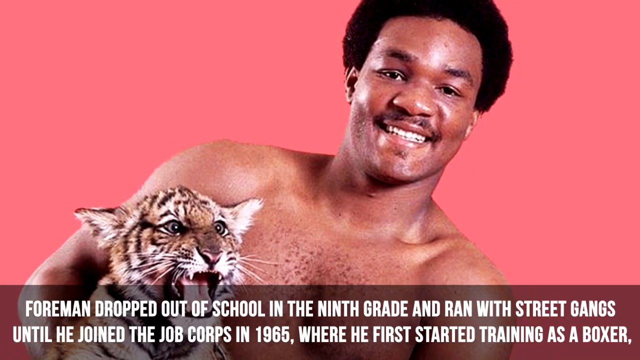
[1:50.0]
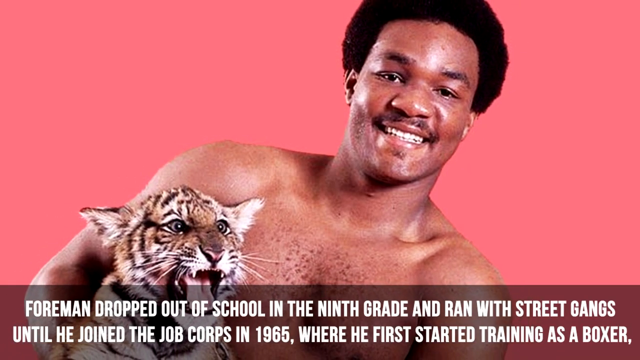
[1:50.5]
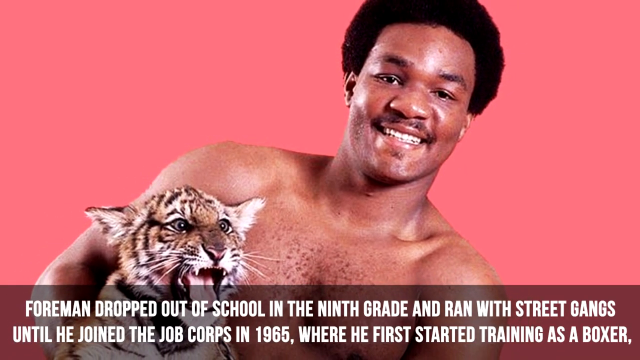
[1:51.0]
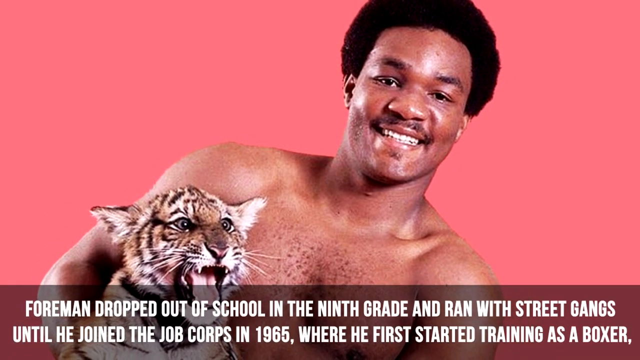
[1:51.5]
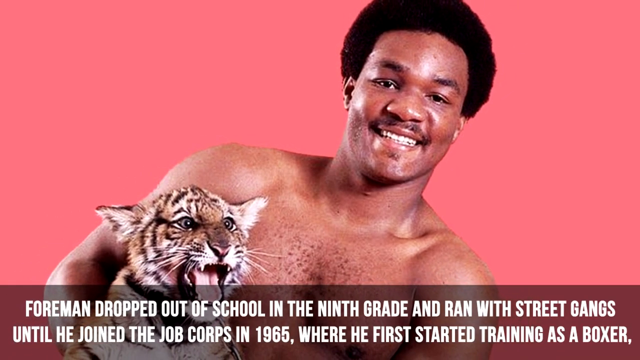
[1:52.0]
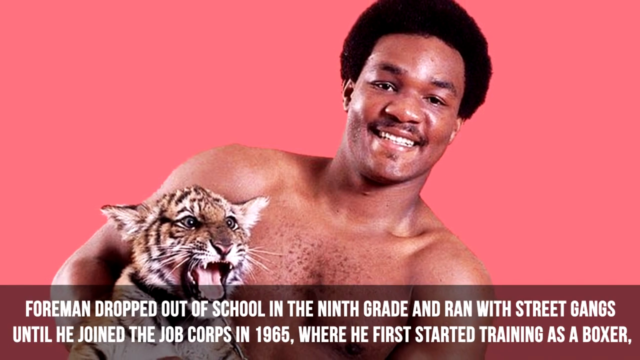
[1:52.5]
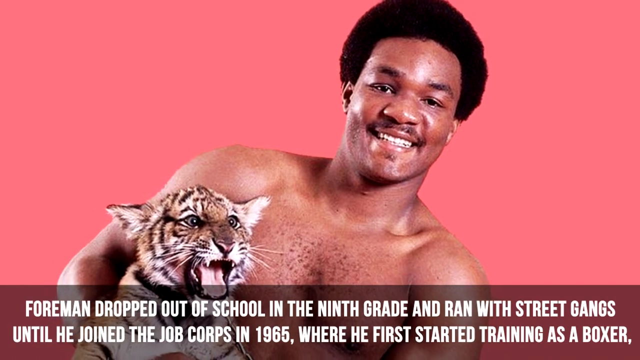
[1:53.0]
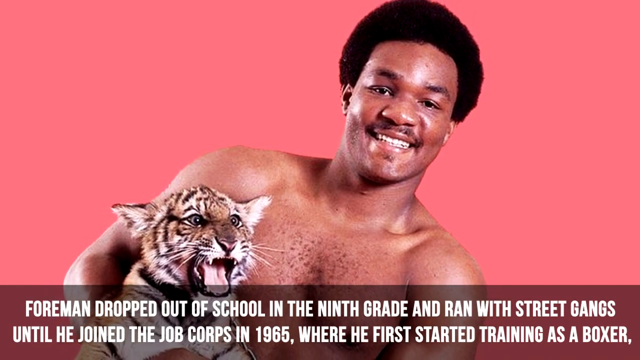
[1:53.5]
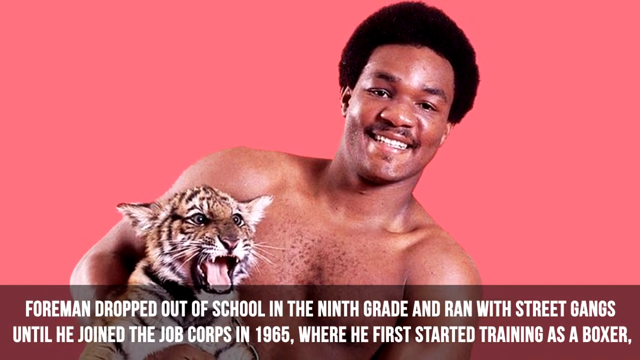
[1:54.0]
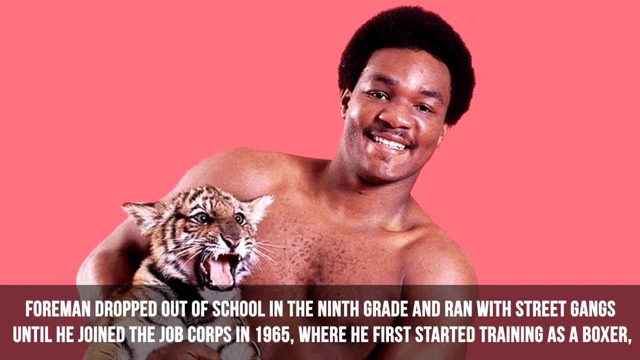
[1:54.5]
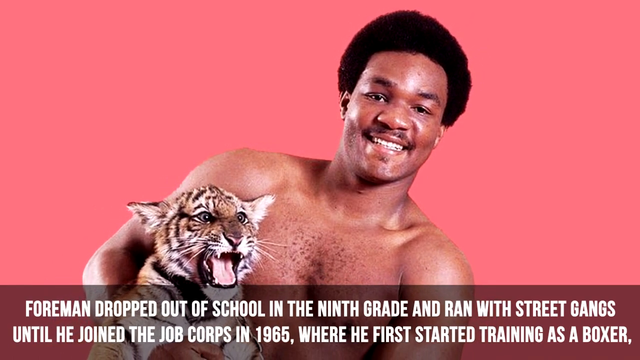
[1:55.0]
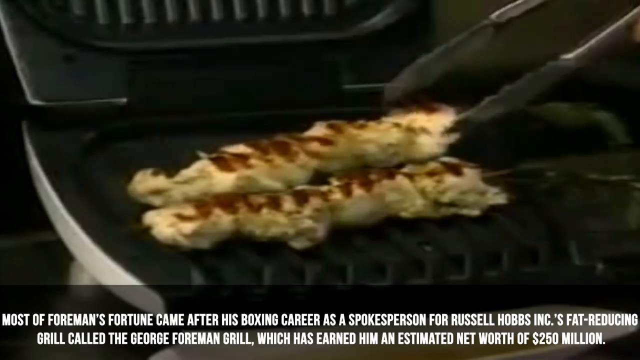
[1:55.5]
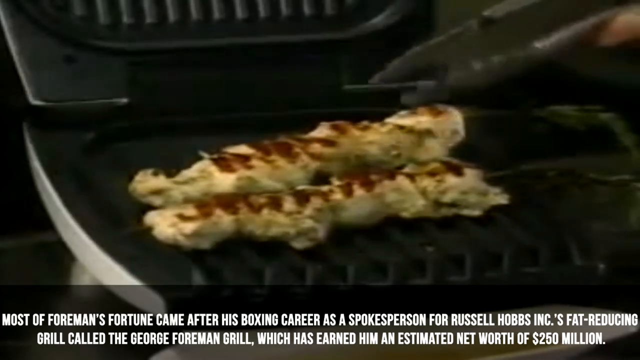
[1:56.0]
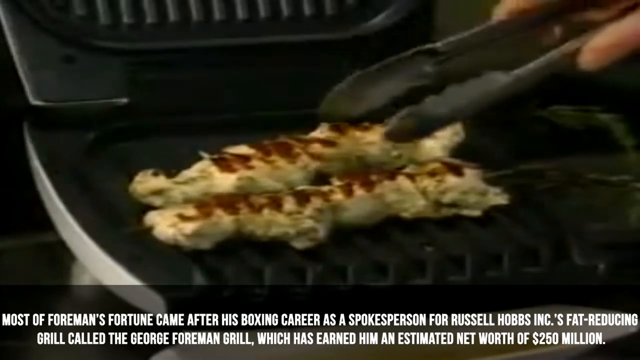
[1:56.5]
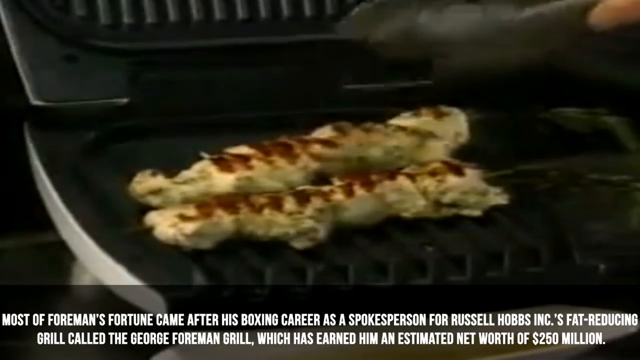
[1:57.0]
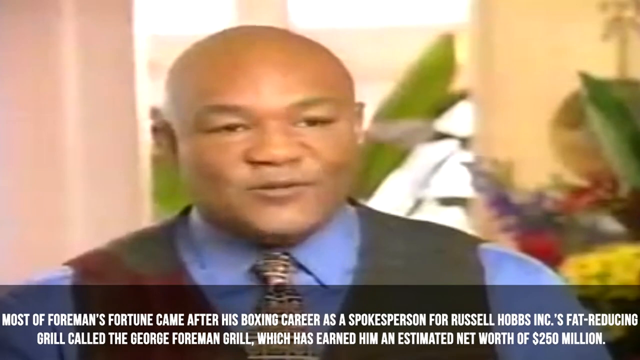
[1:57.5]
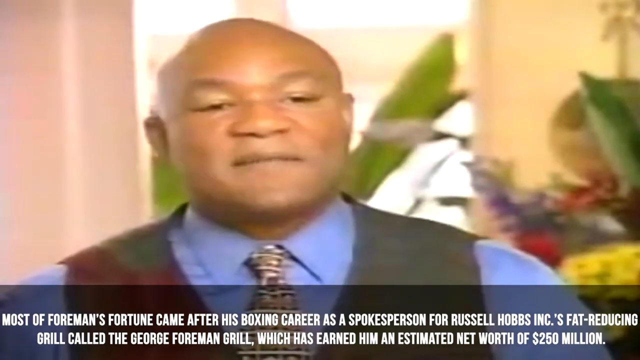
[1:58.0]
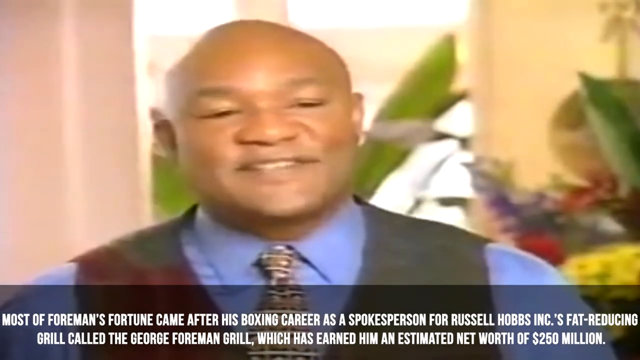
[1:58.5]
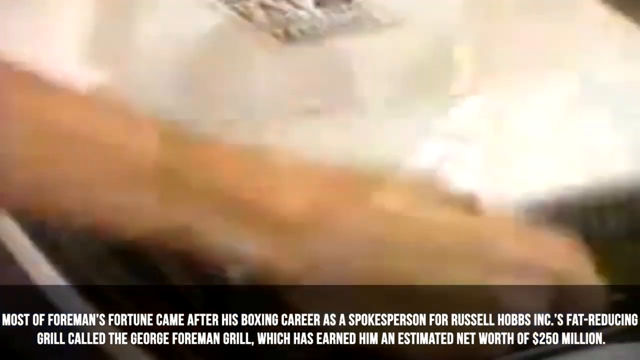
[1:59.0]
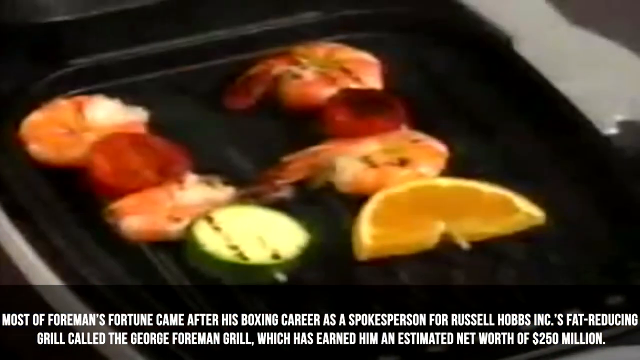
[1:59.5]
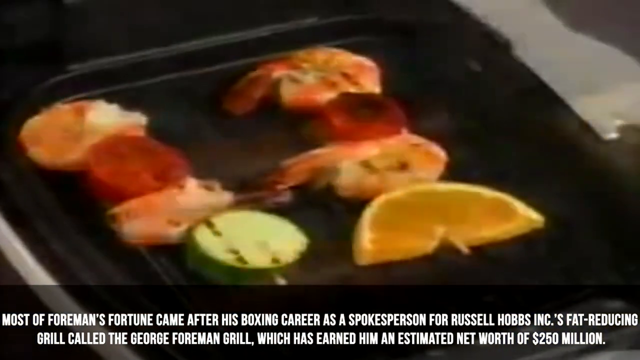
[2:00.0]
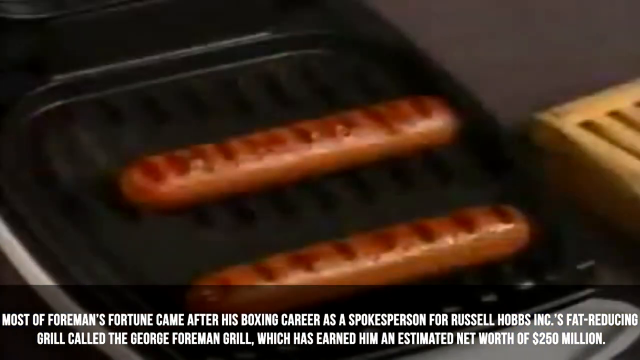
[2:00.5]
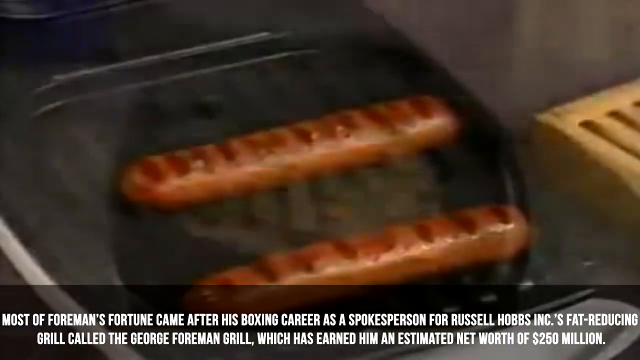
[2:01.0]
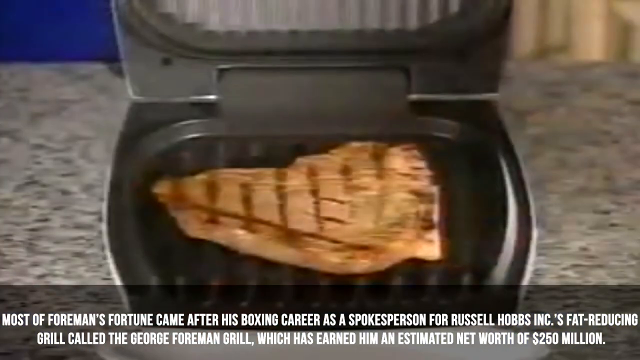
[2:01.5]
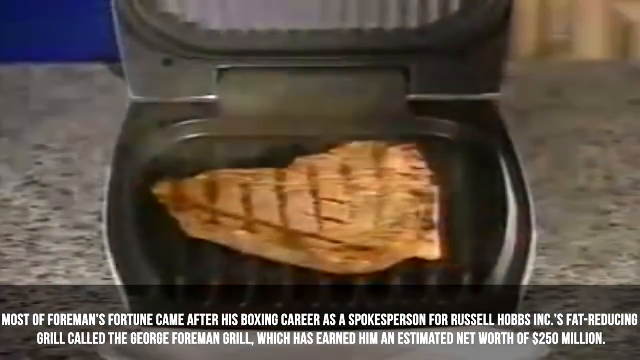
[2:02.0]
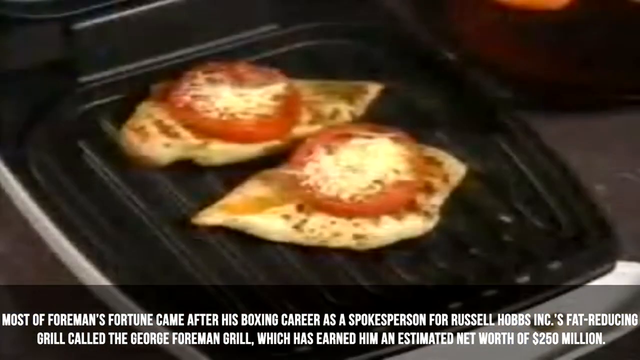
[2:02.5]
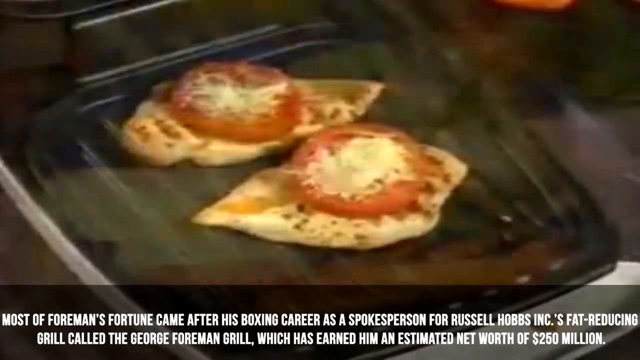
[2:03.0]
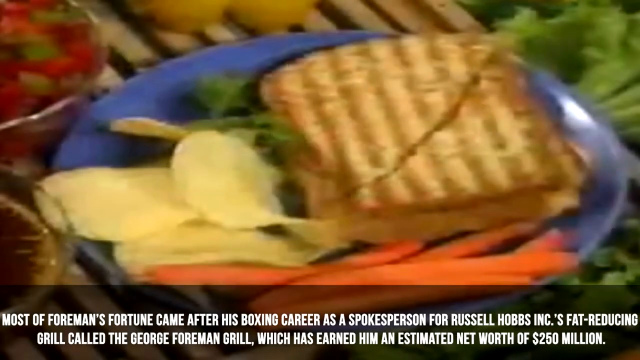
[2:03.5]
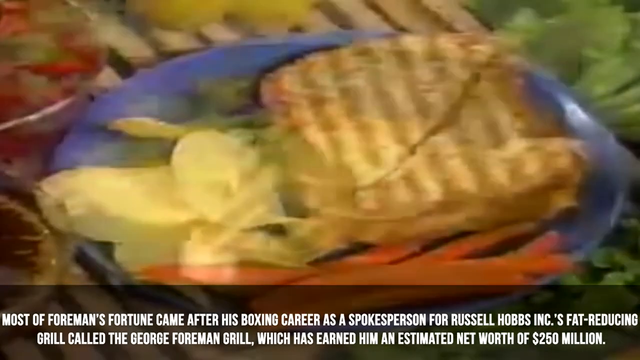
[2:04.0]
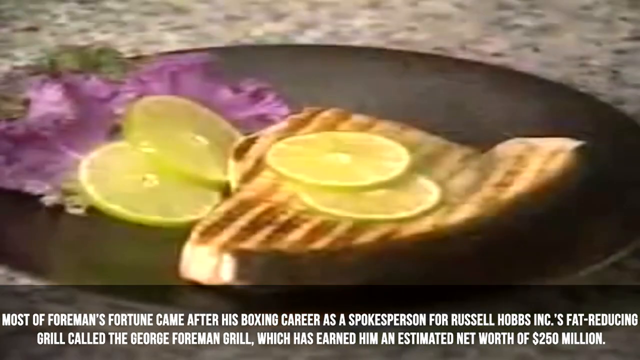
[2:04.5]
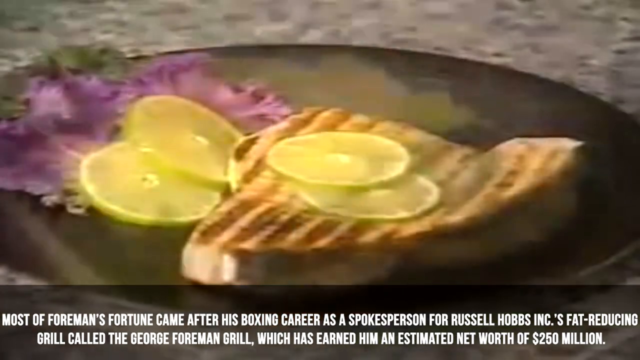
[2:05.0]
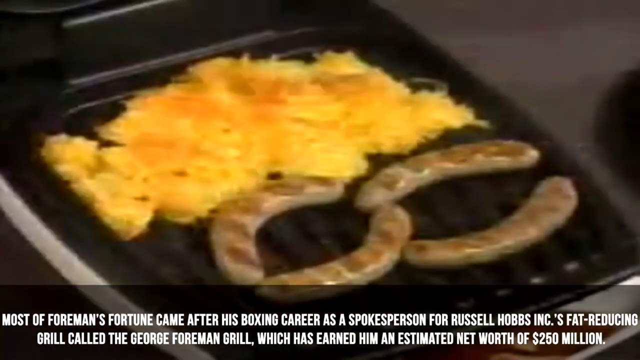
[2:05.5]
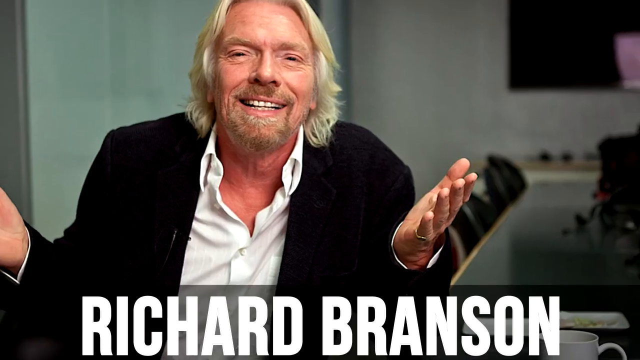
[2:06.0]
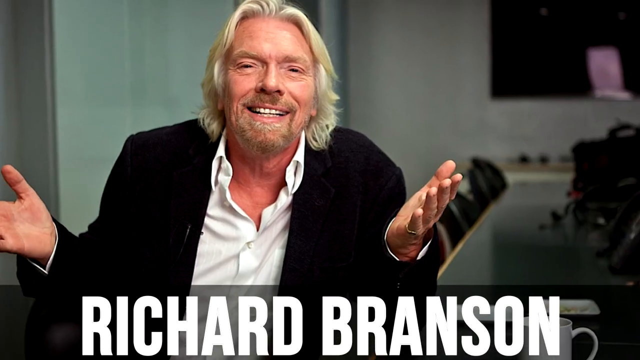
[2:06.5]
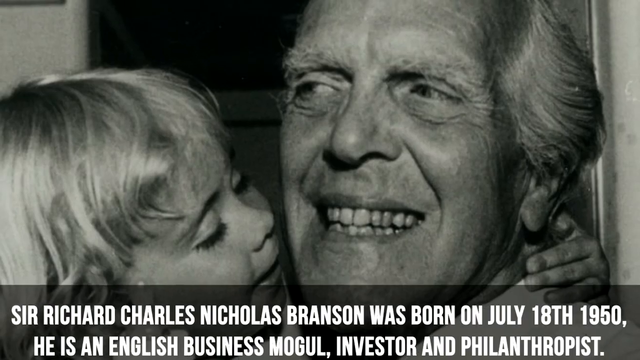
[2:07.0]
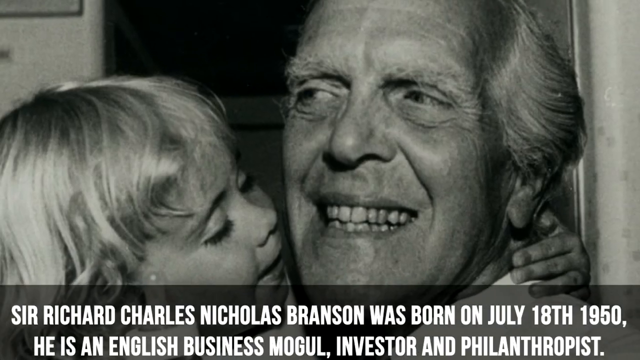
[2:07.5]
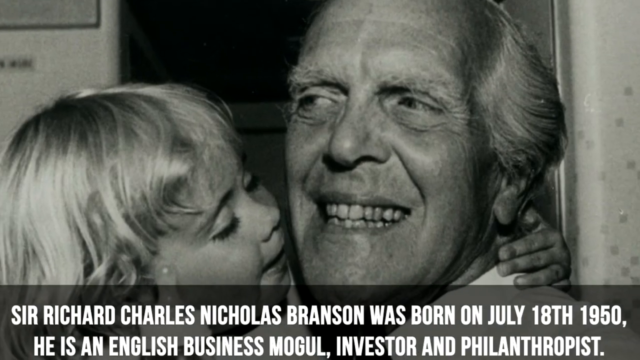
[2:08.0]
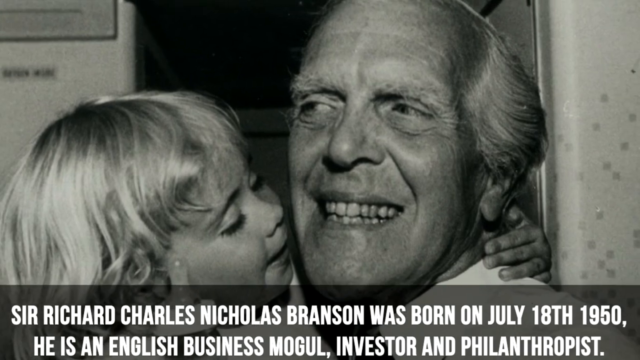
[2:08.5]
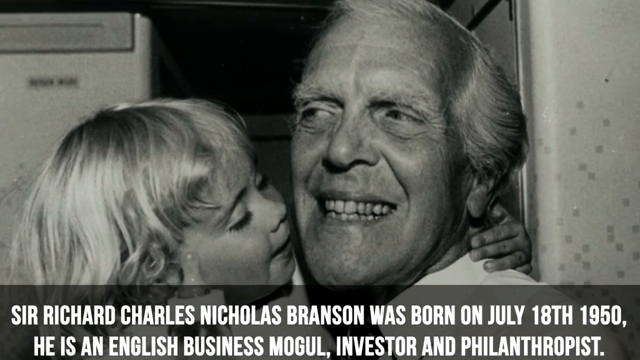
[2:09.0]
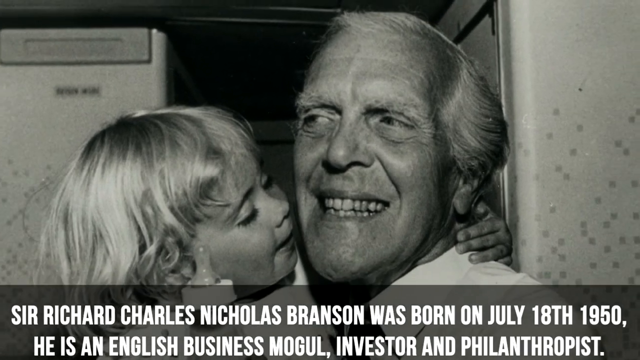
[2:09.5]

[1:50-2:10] The photo of George holding the little tiger is on a red, 1970s- or 1980s-style background; the tiger looks more to the right while George looks straight at the camera. White text at the bottom continues about him dropping out of school and running with street gangs, then starting to train as a boxer. A George Foreman grill appears, with text saying his fortune came after his boxing days when he became spokesman for the fat-reducing George Foreman grill. George, bald and in a suit, talks to the camera. The video cuts to a white George Foreman grill opening, with shrimp and vegetables grilling on it, followed by hot dogs, a steak, chicken, a prepared sandwich, something that looks like fish, and weenies and potatoes. At the very end, the video cuts to Richard Branson.